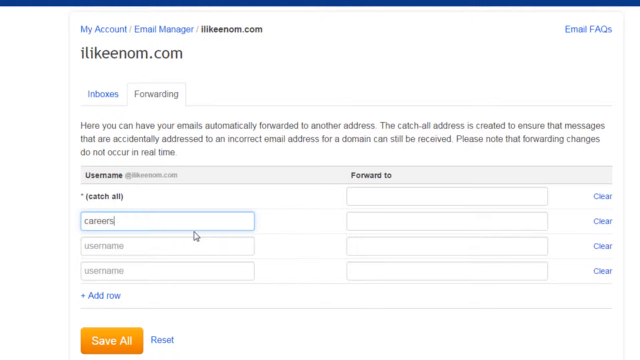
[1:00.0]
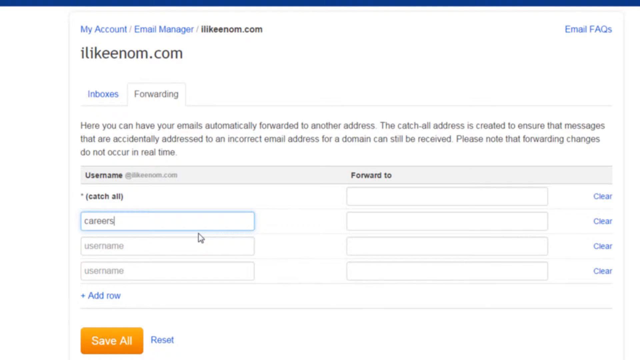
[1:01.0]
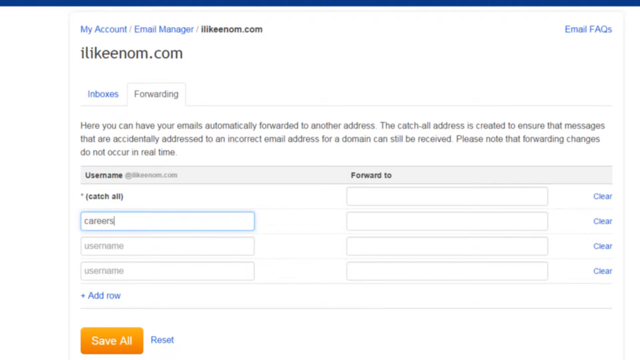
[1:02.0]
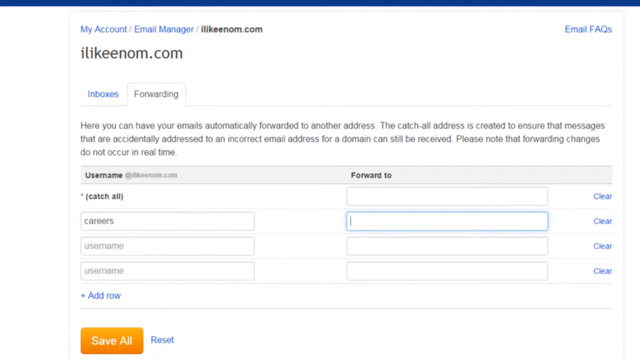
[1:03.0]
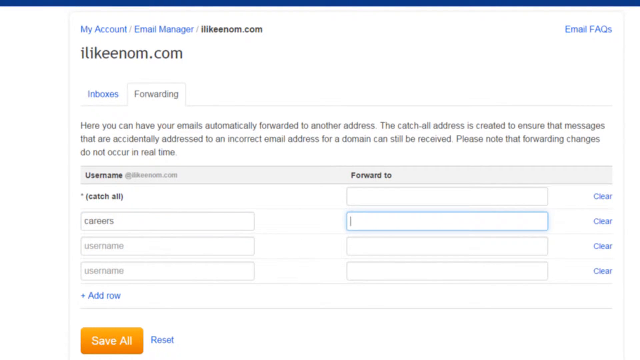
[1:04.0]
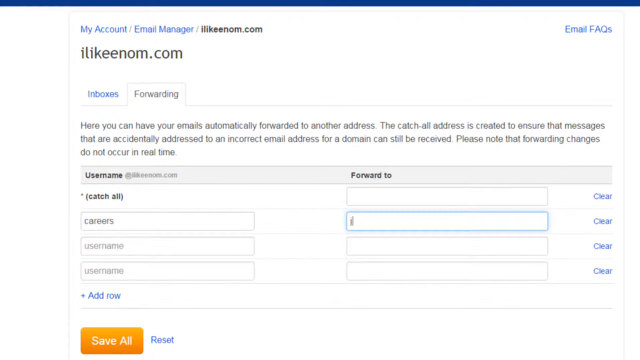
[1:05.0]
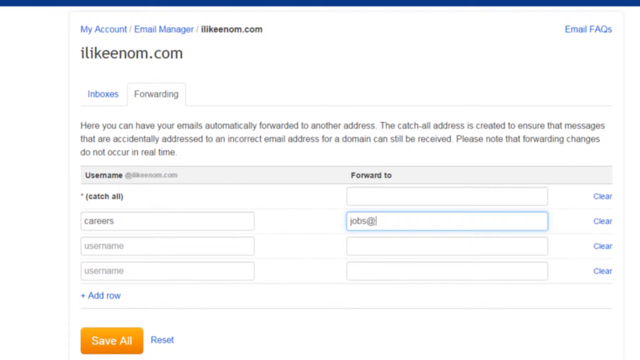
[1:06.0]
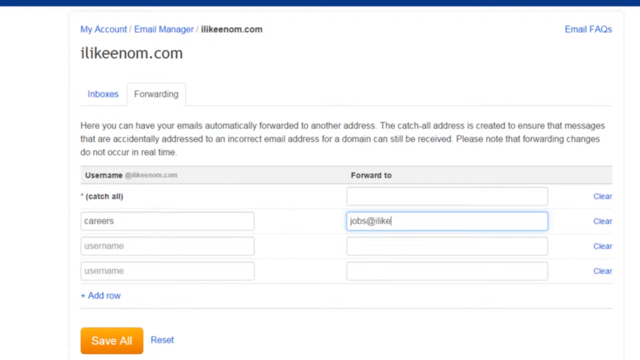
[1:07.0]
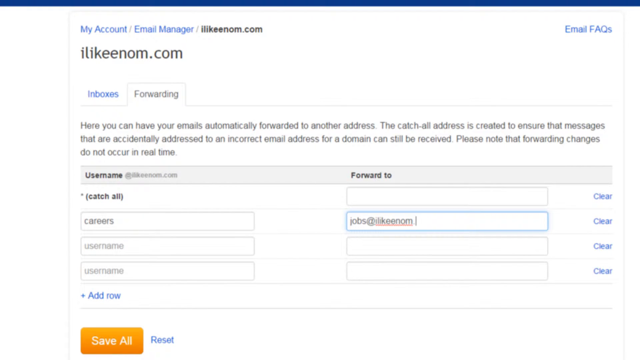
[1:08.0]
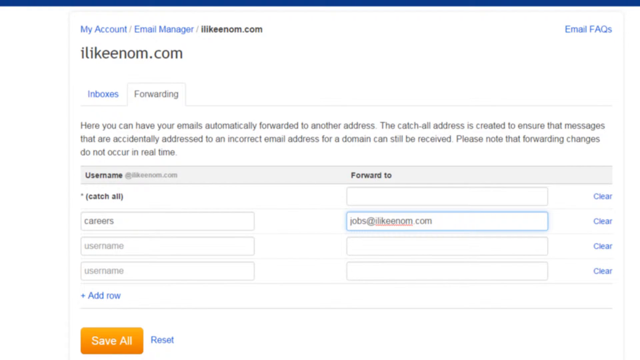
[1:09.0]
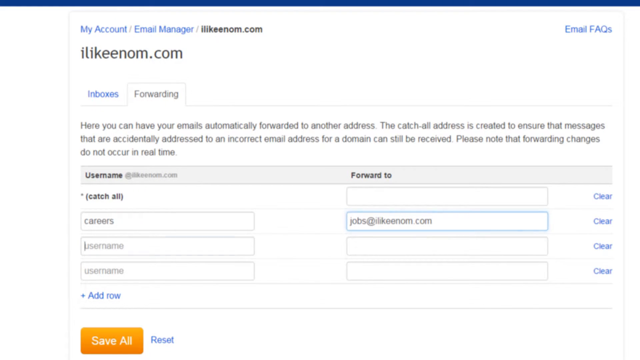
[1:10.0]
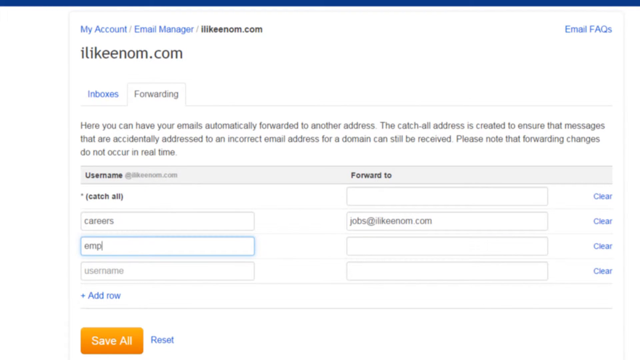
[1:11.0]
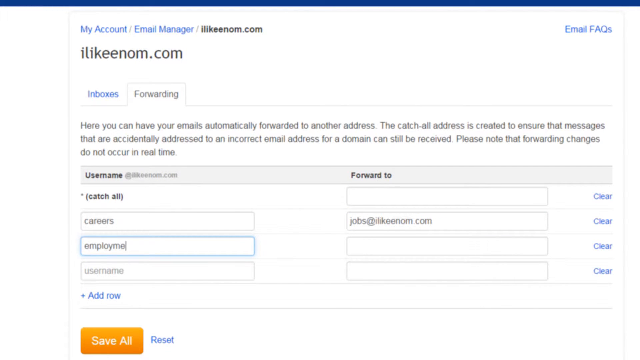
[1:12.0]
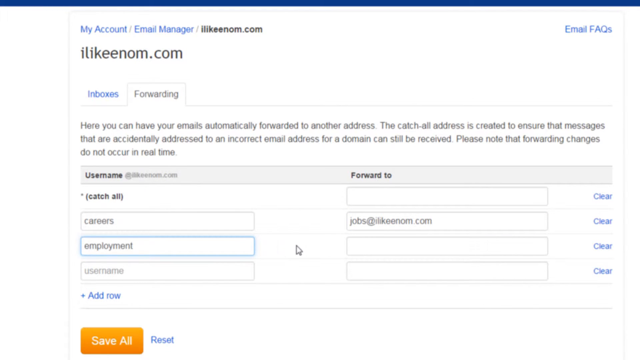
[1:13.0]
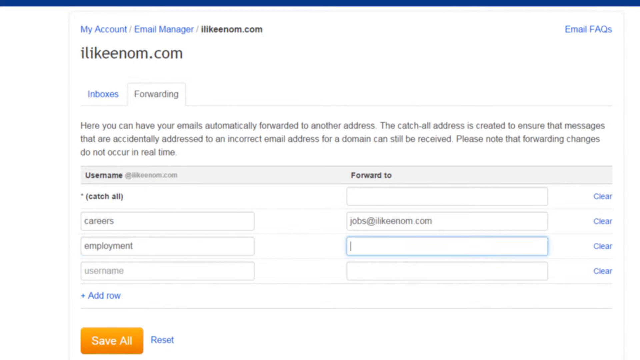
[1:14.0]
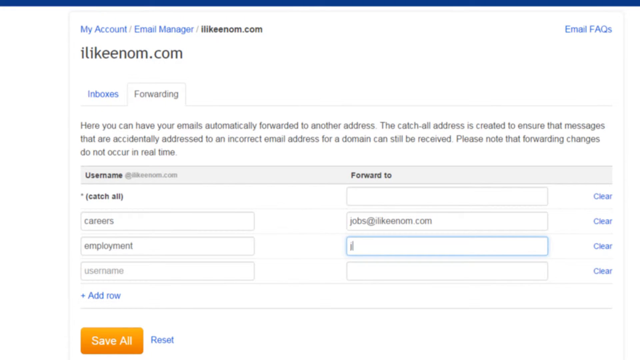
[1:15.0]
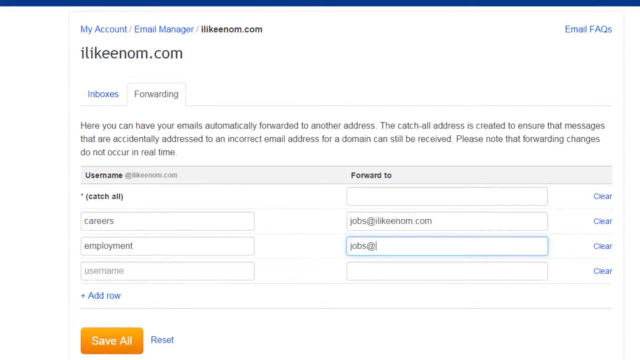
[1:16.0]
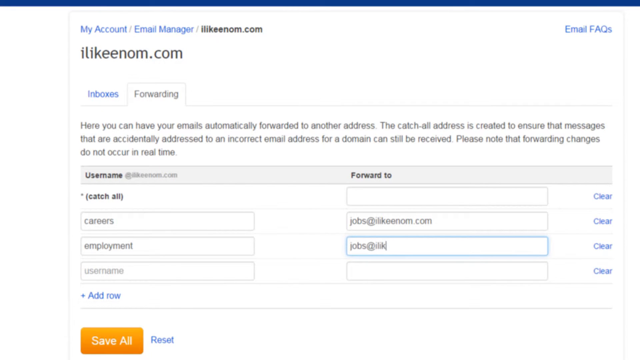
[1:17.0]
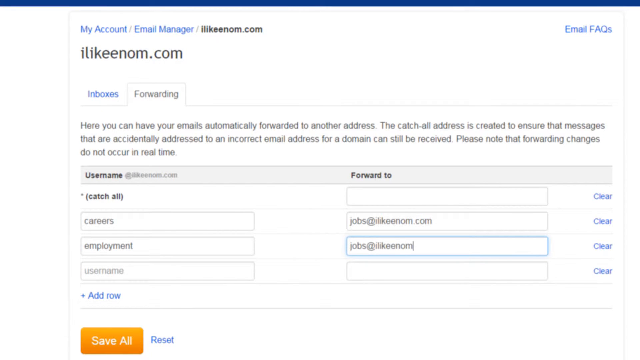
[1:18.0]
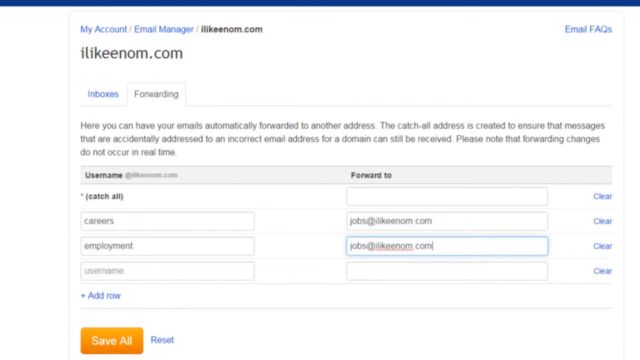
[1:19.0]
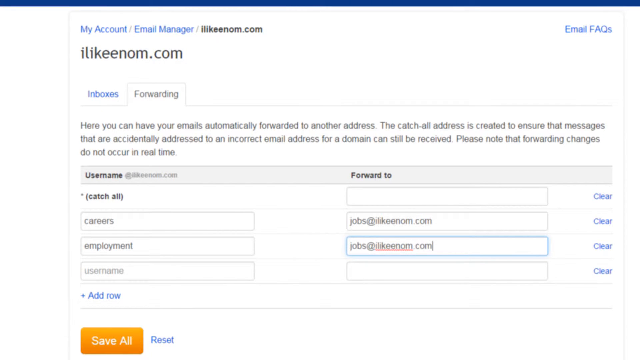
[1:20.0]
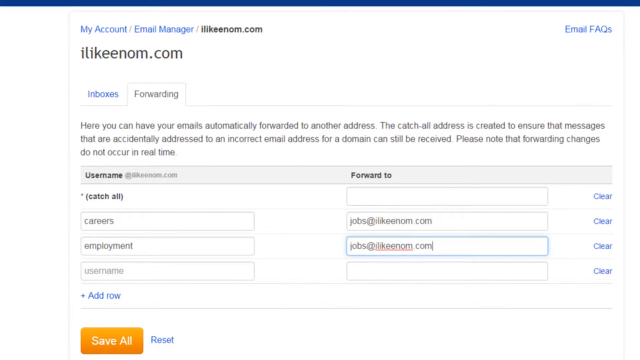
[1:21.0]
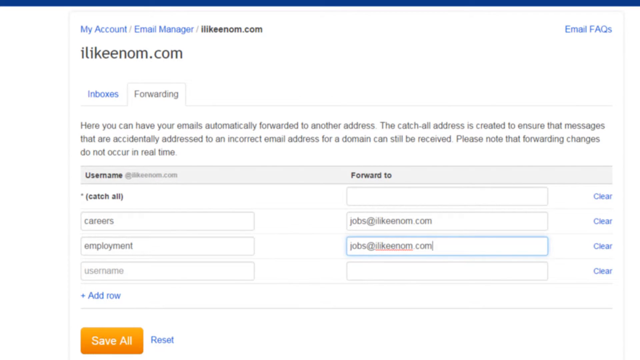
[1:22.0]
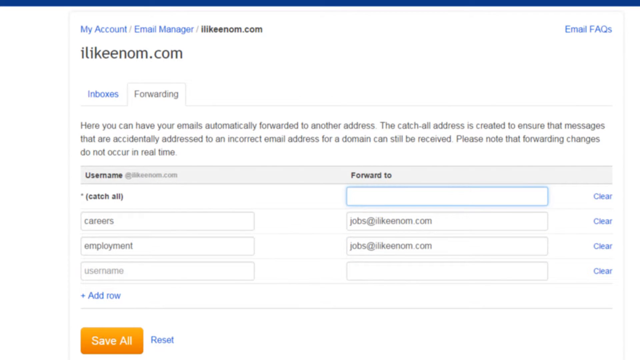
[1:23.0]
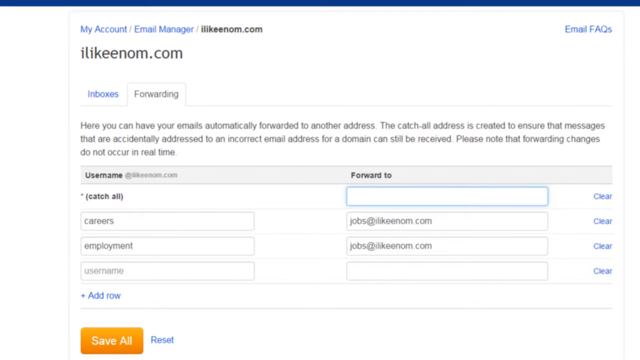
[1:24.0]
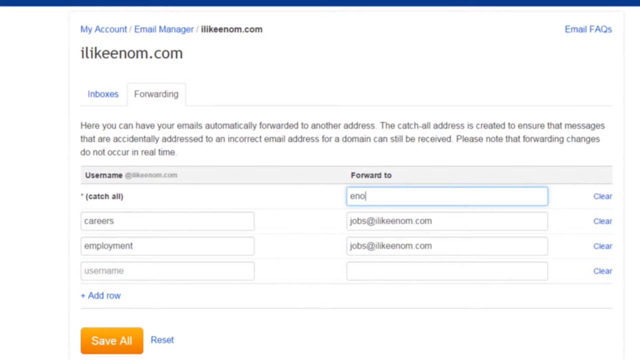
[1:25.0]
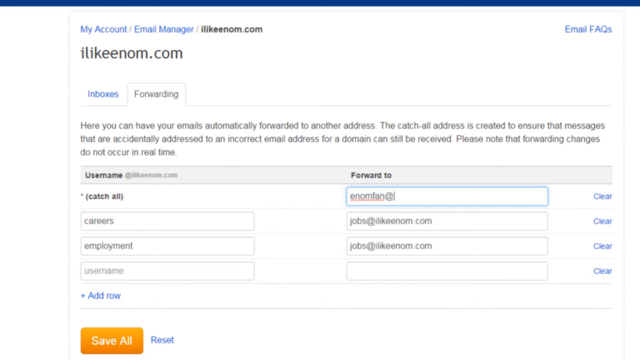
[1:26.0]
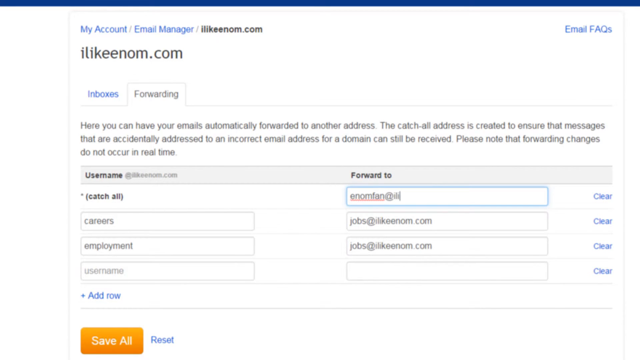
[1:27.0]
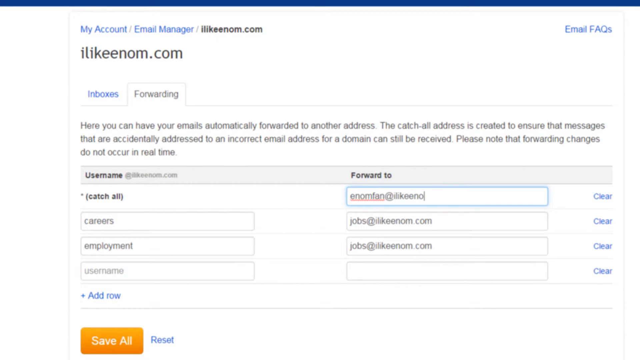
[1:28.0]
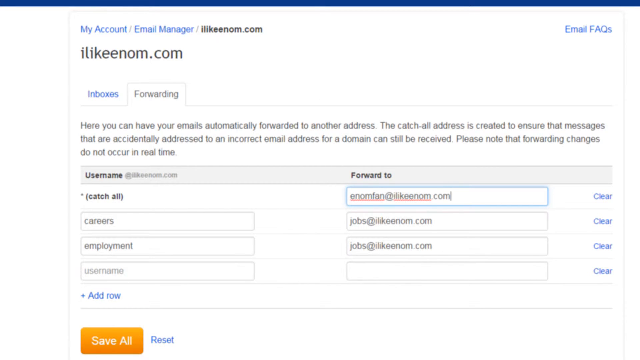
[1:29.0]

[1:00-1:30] A website is pulled up, and at the top of the screen there are options reading "My Account" and "My Email Manager," followed by a listed website. Further down there are tabs, one saying "Inboxes" and the other "Forwarding," with options and fillable boxes below. The user appears to be filling out information in the boxes, using a white arrow pointer to go over the different sections. On the right side, blue writing says "clear," for clearing the boxes, and the upper right corner says "email facts." The boxes on the screen are labeled "username" and "forward to."